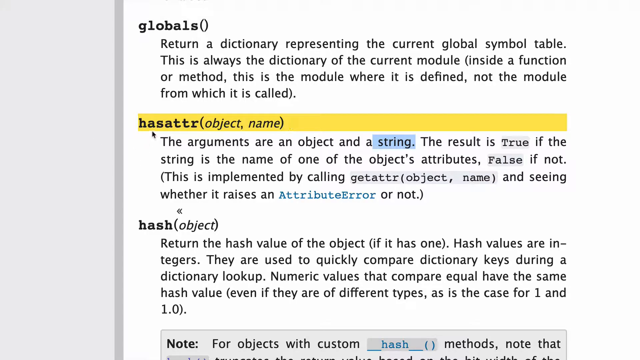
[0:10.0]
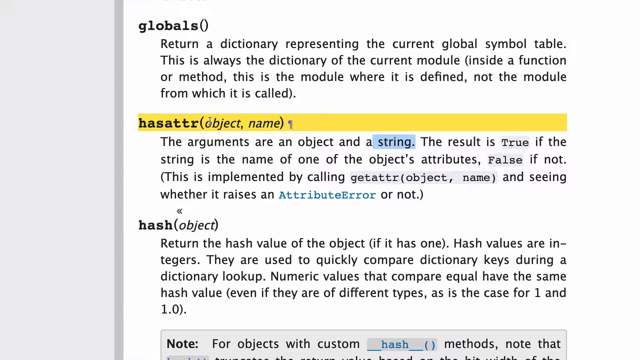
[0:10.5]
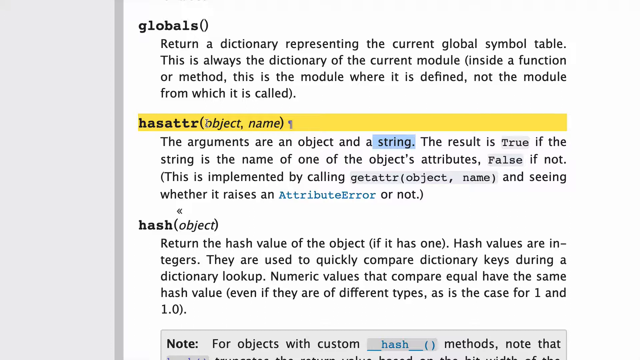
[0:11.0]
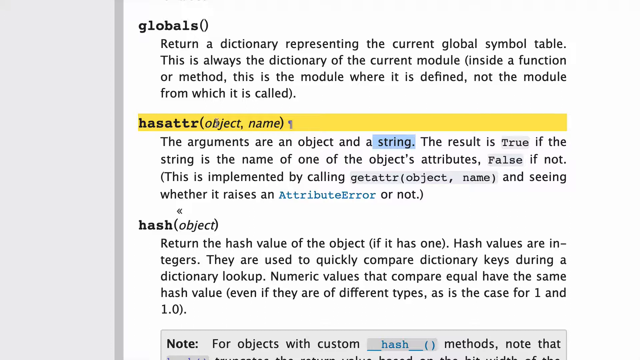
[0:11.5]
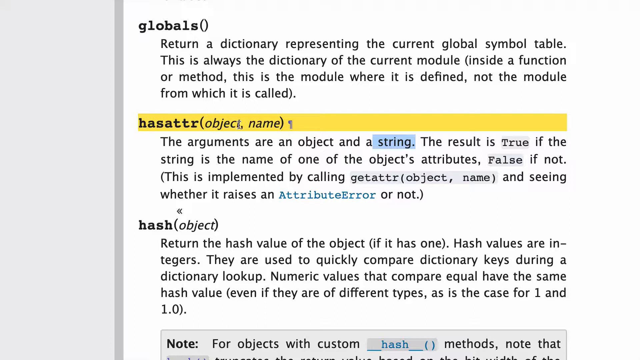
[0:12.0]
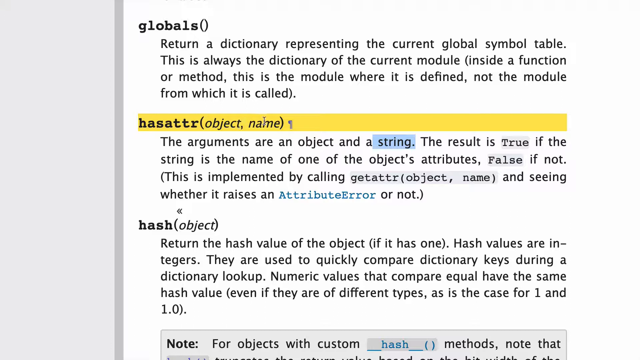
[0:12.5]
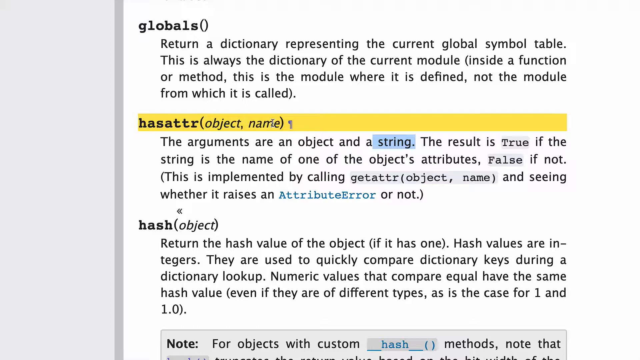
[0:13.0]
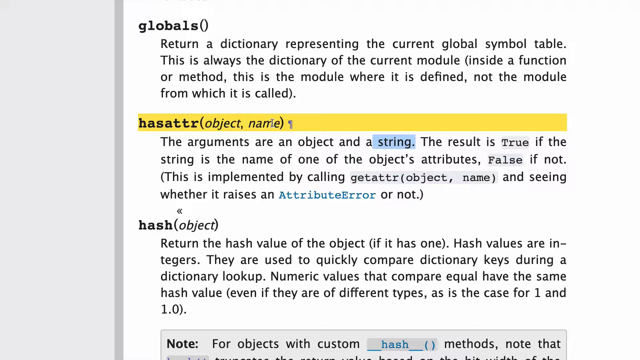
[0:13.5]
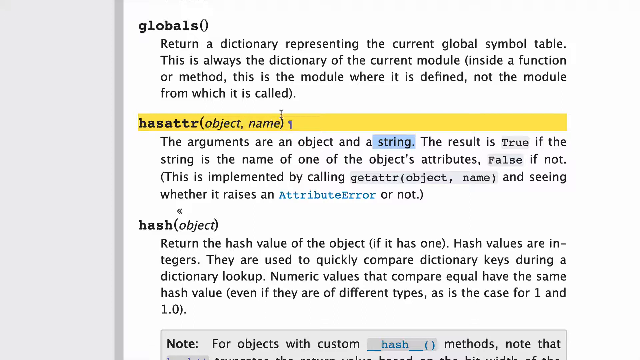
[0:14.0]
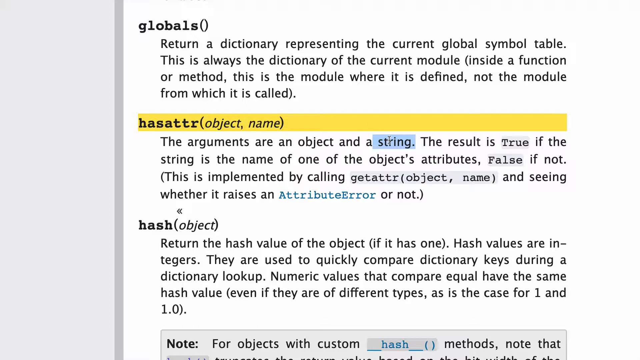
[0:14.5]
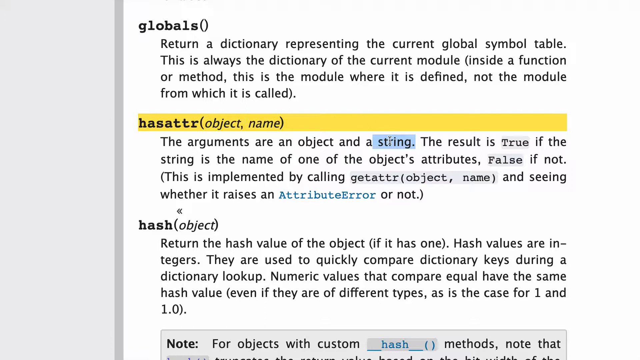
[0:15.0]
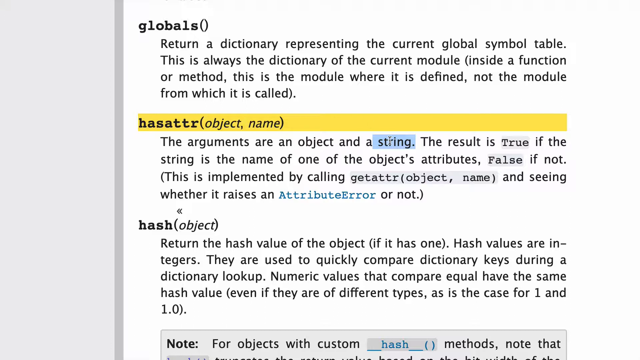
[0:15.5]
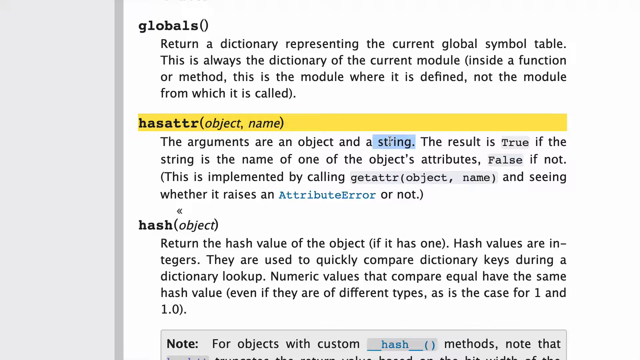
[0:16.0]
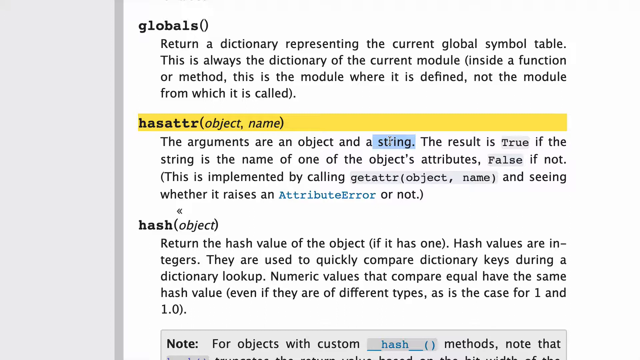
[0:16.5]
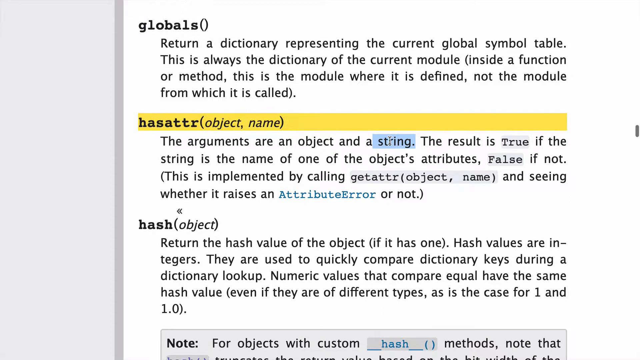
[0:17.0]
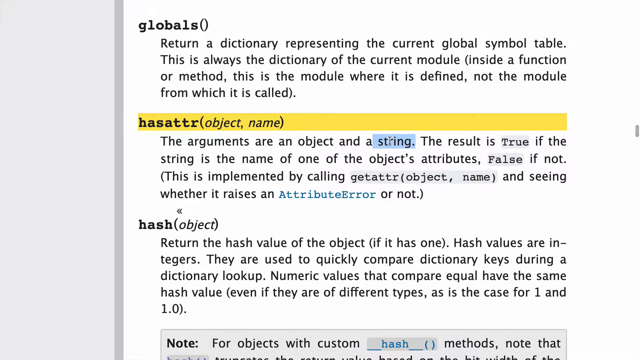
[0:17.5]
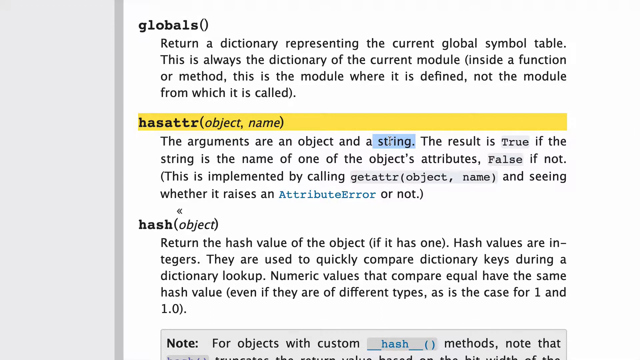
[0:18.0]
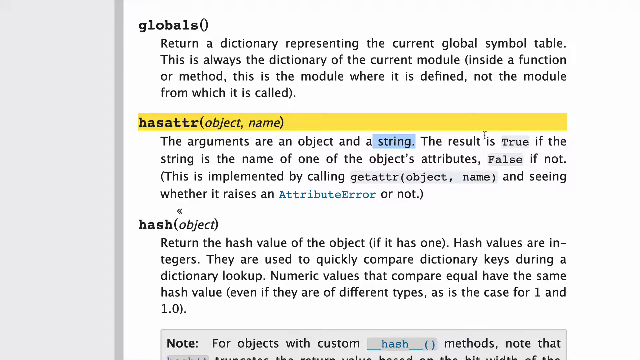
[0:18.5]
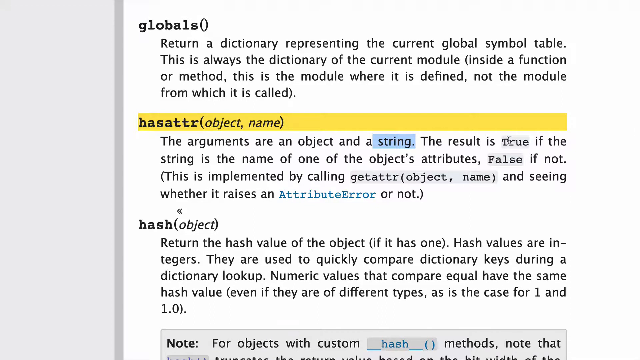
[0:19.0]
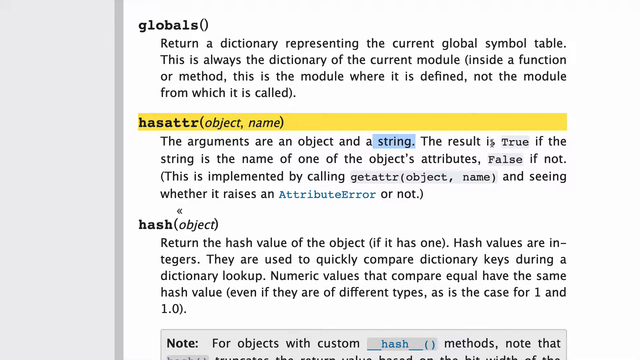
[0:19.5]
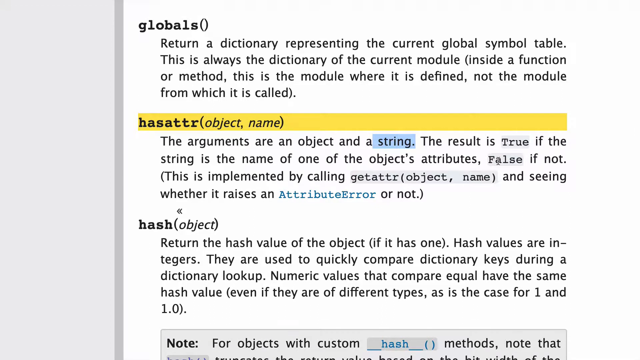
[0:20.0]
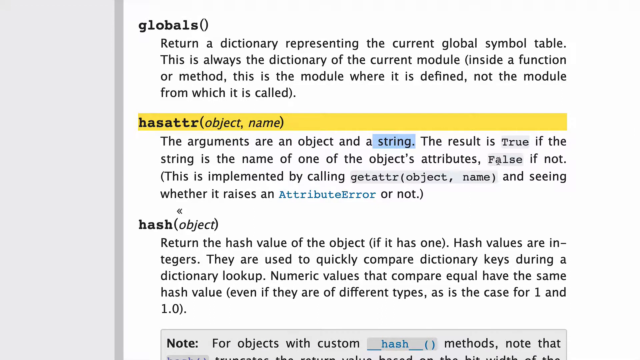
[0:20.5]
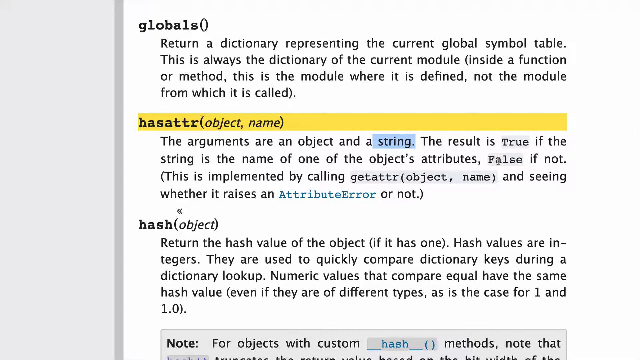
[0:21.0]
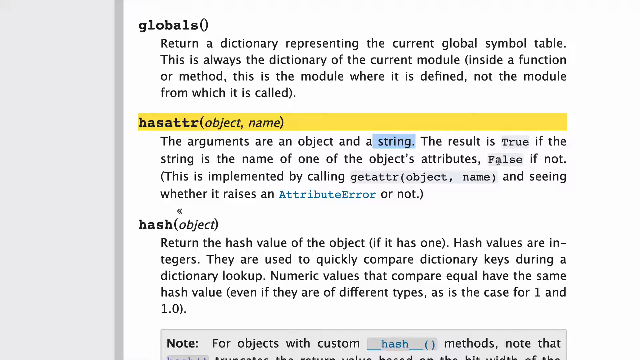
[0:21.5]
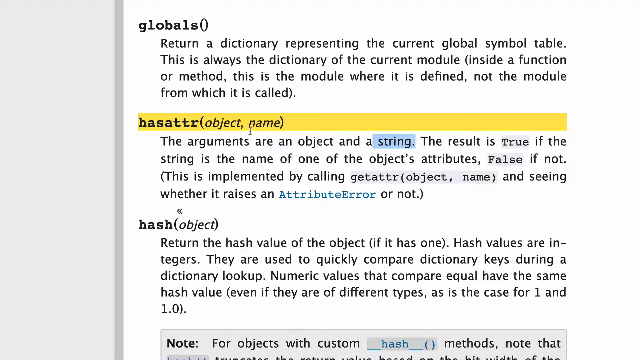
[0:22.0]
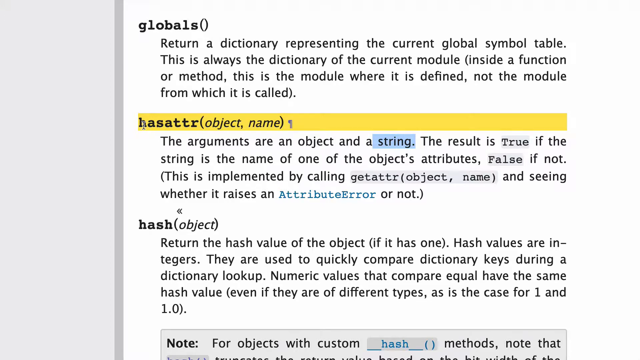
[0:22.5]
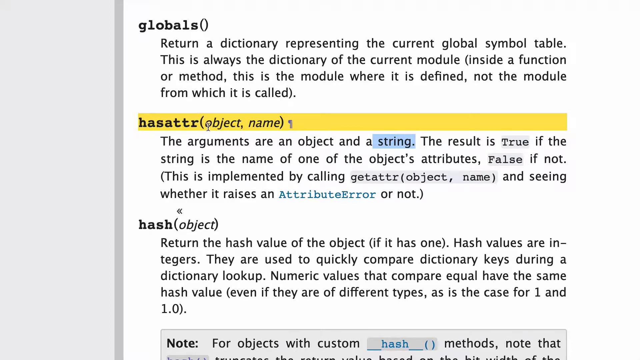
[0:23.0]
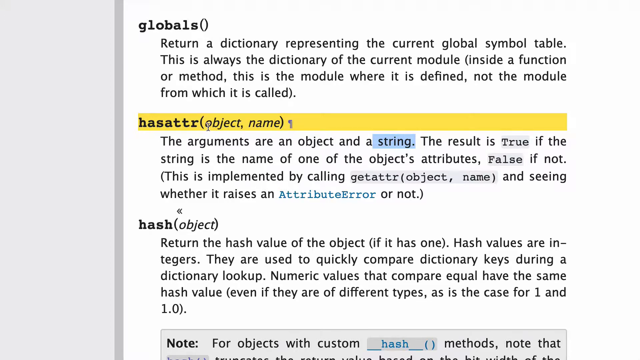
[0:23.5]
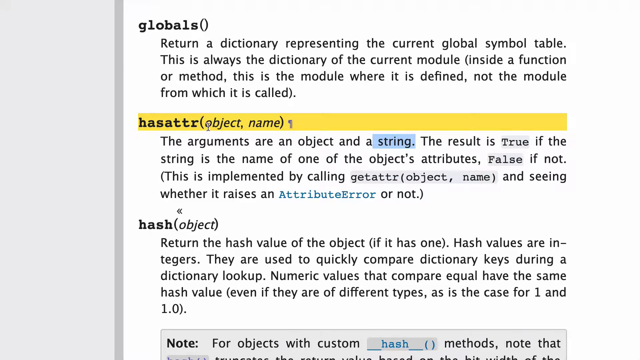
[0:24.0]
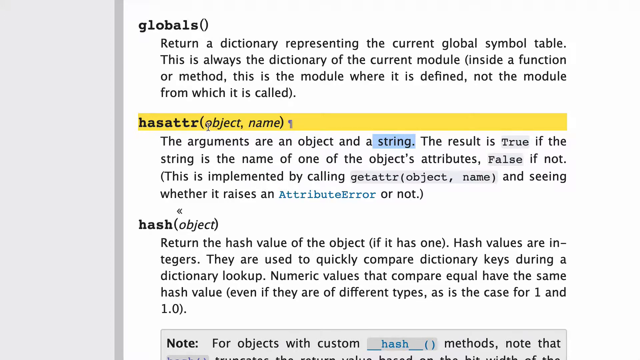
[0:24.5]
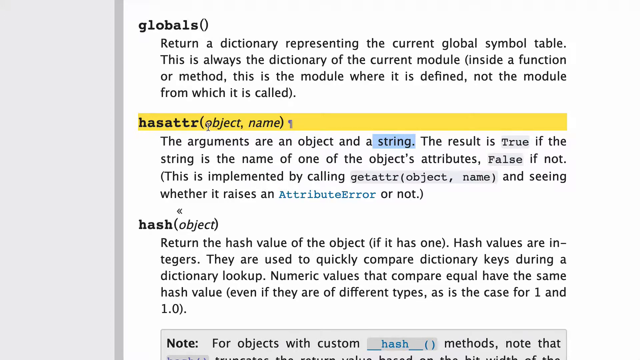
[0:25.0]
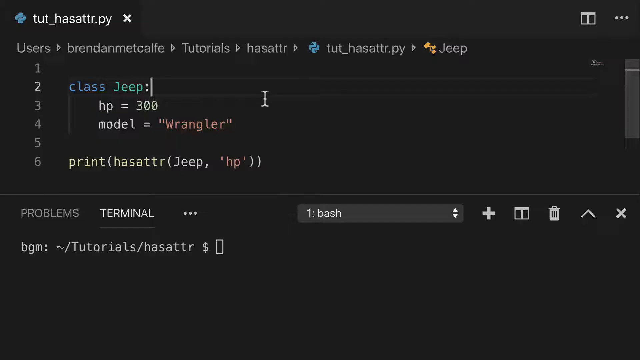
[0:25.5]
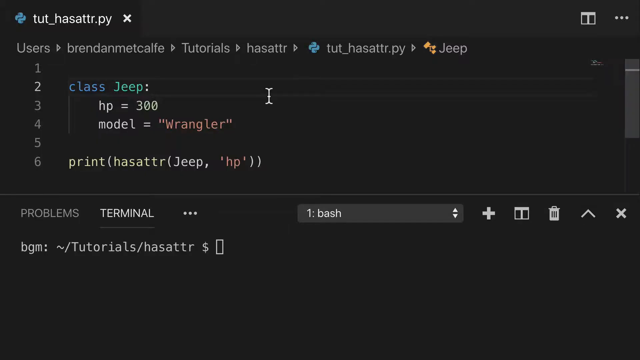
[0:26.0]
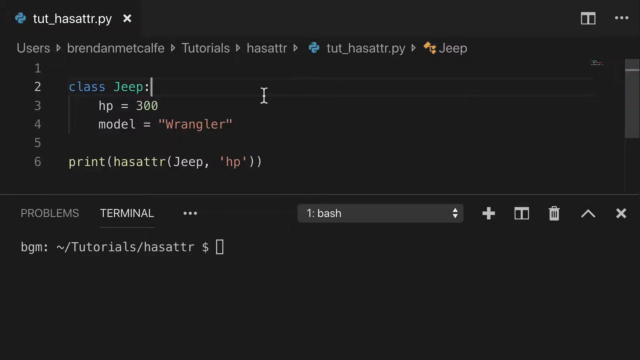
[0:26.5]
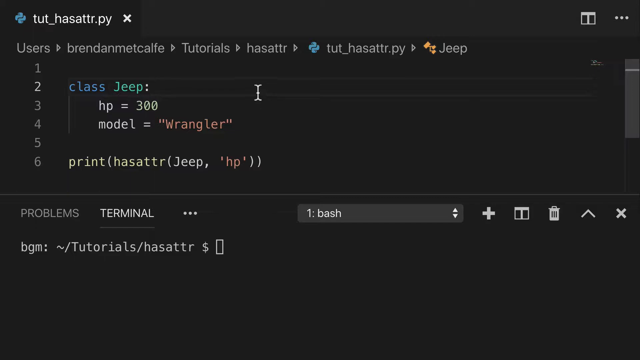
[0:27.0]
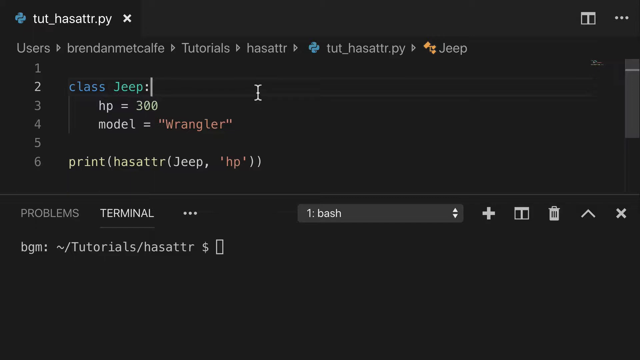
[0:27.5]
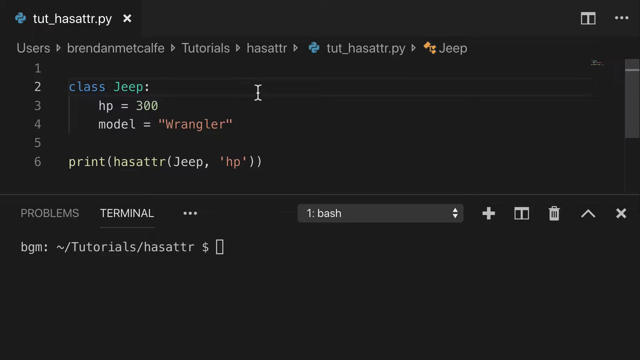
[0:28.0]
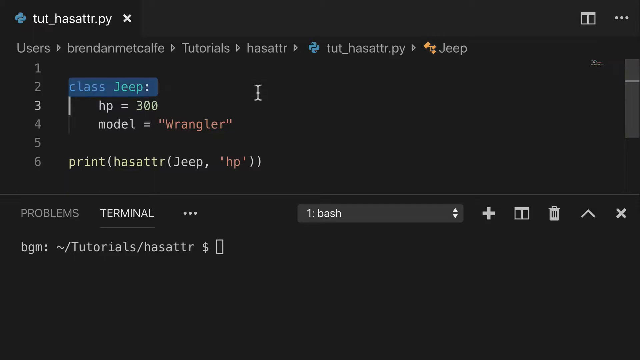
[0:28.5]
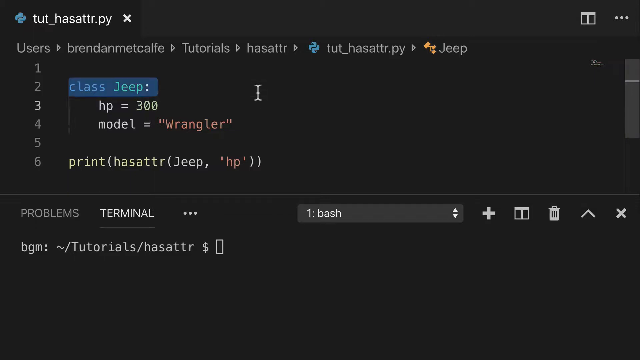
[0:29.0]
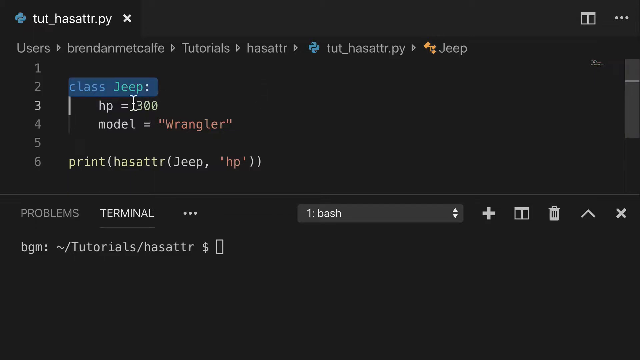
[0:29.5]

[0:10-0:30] A book page clipping has black text on a plain white background. It contains three topics, each followed by a paragraph of explanation: "Globals()", "Hasattr(object,name)" and "Hash(object)". The second topic, Hasattr(), is highlighted in yellow. The first line of its explanation reads "the arguments are an object and a string", with "string" selected in blue, and the mouse hovers around this blue selection. Below, true and false conditions are written, and the mouse hovers around that portion. Then a Python editor with a dark background appears, showing a file titled tut-hasattr.py. The main code portion has 6 lines, and a terminal is open below it. The cursor blinks near the first line of the code, "class jeep:", and this line is selected. The cursor then blinks on the second line of the code.